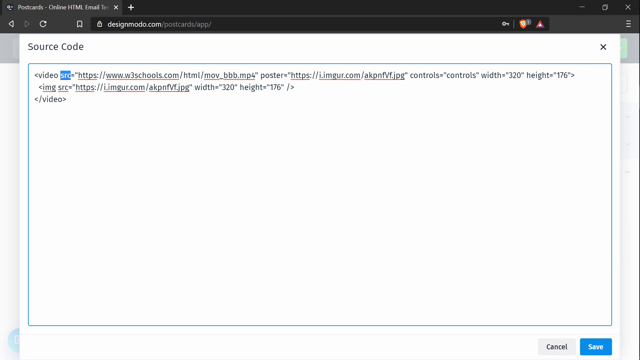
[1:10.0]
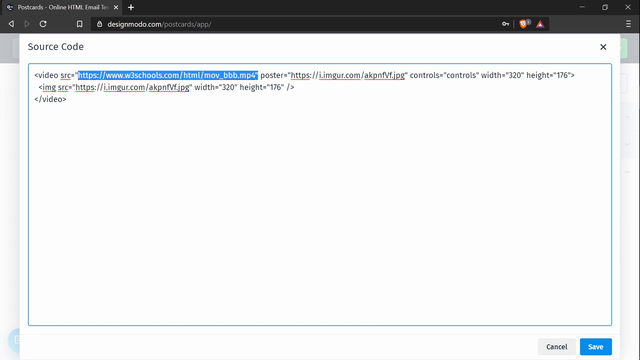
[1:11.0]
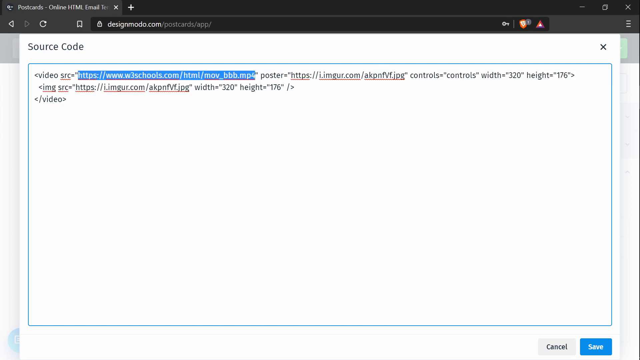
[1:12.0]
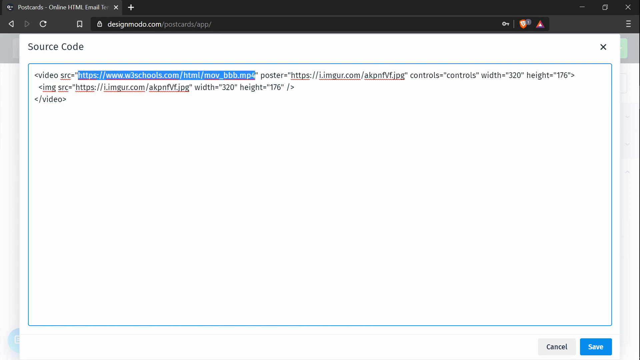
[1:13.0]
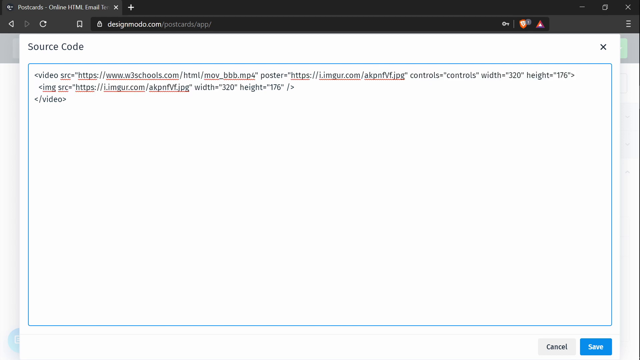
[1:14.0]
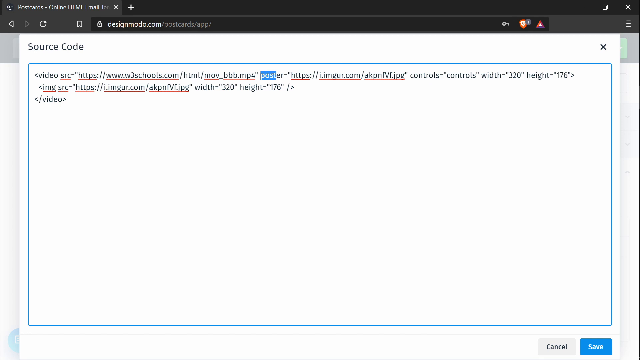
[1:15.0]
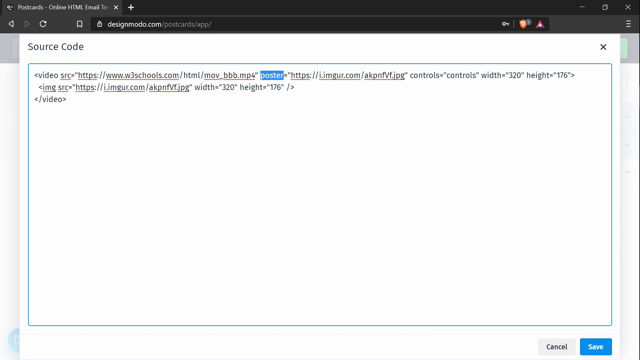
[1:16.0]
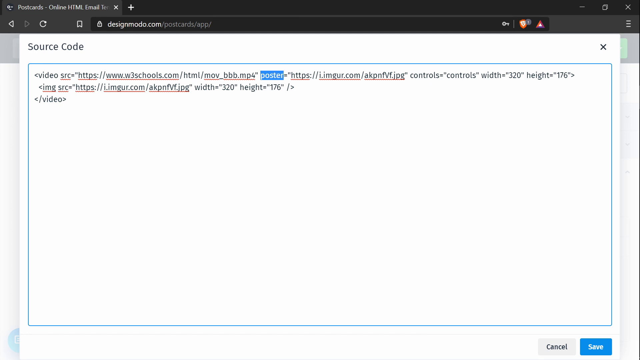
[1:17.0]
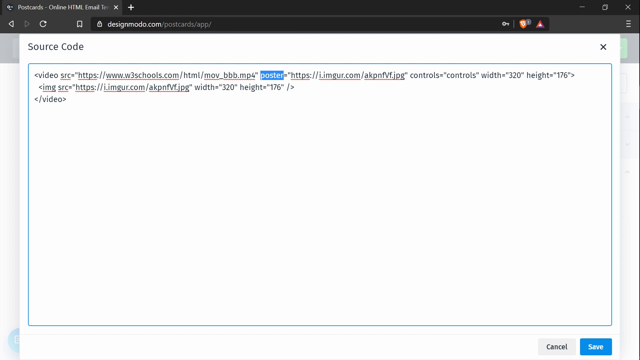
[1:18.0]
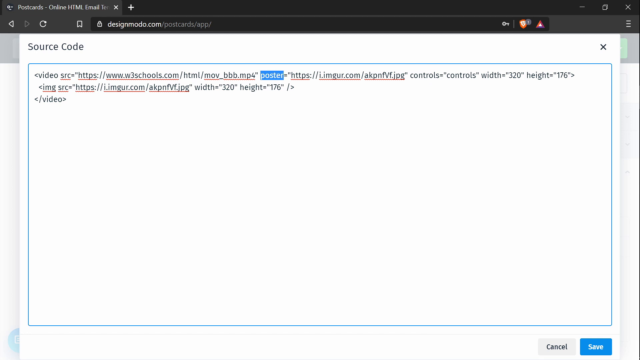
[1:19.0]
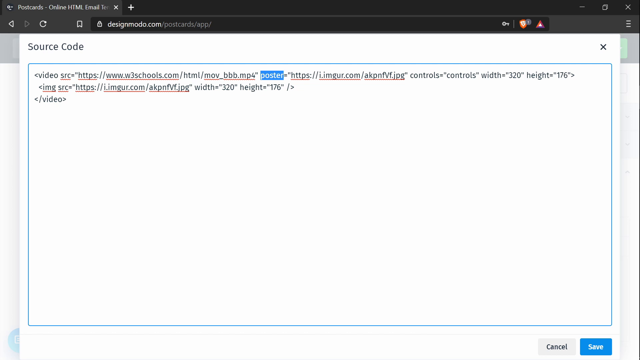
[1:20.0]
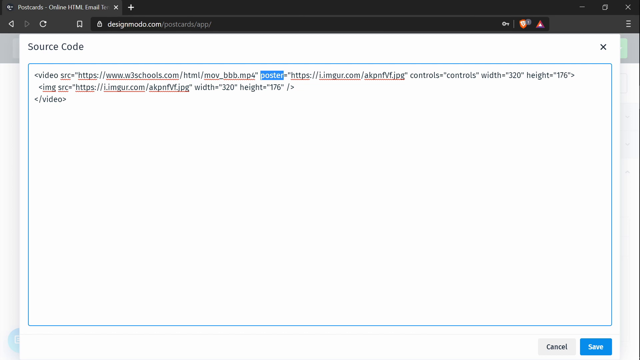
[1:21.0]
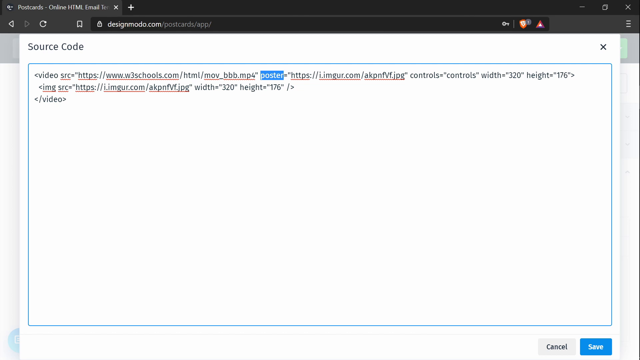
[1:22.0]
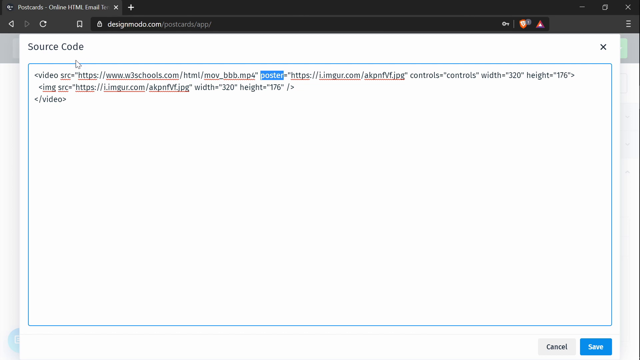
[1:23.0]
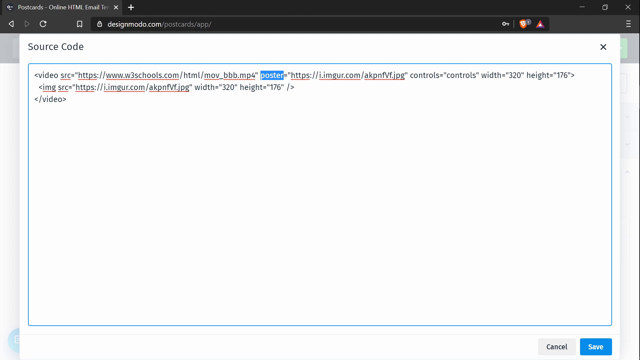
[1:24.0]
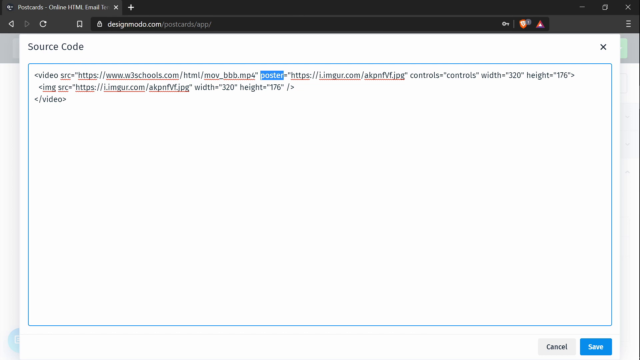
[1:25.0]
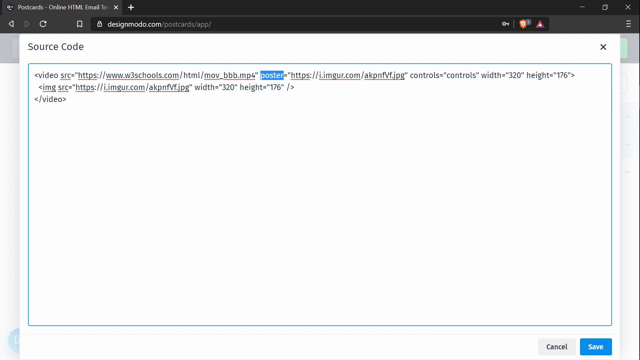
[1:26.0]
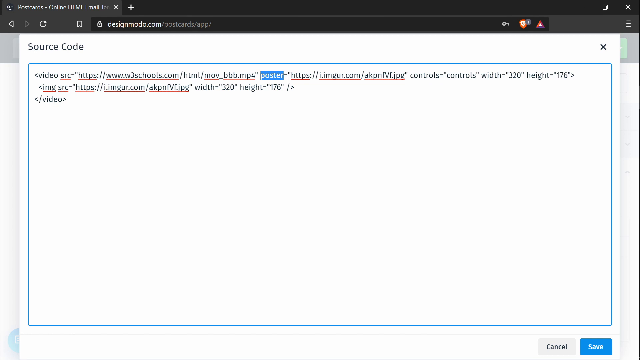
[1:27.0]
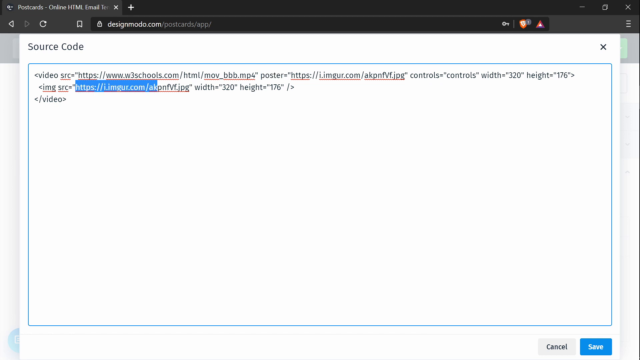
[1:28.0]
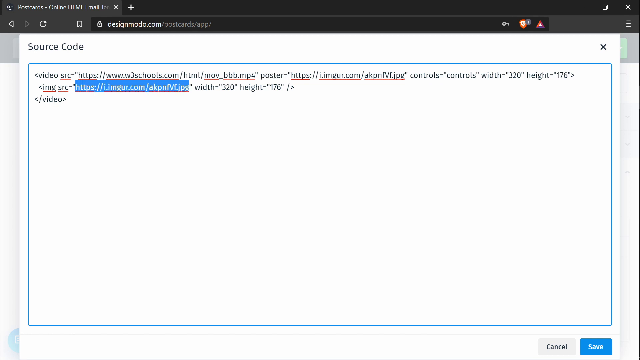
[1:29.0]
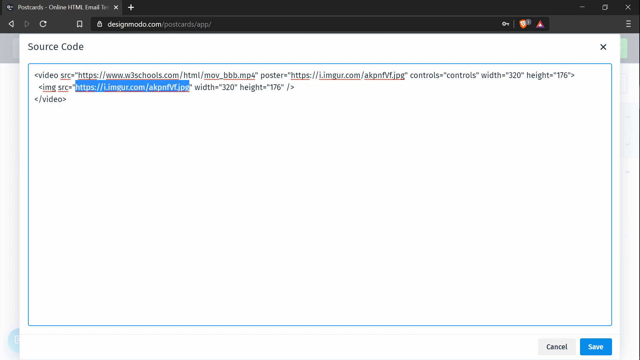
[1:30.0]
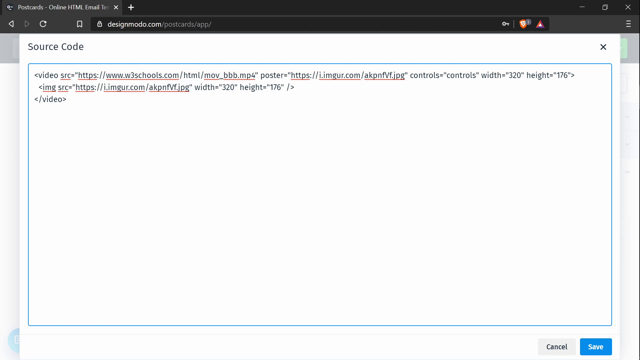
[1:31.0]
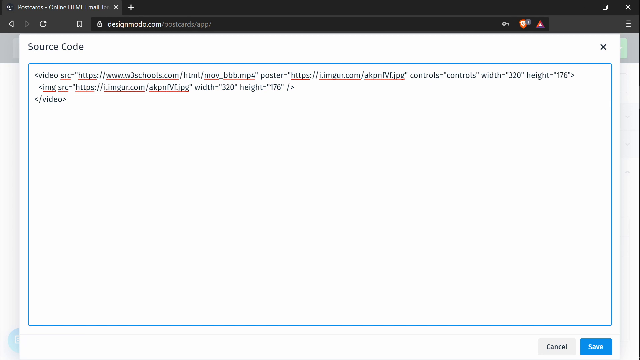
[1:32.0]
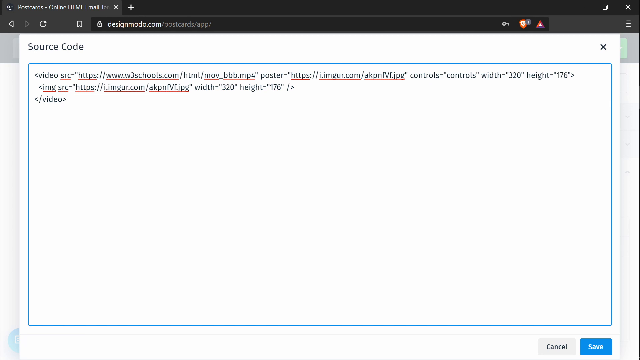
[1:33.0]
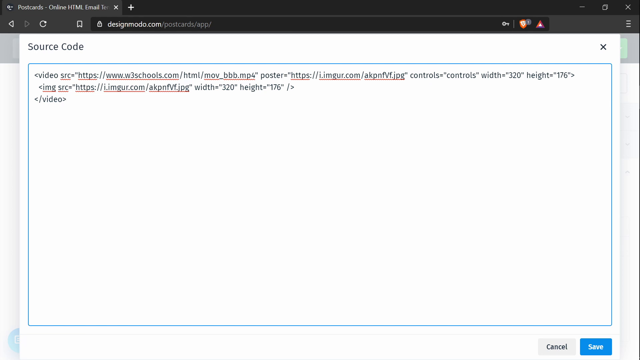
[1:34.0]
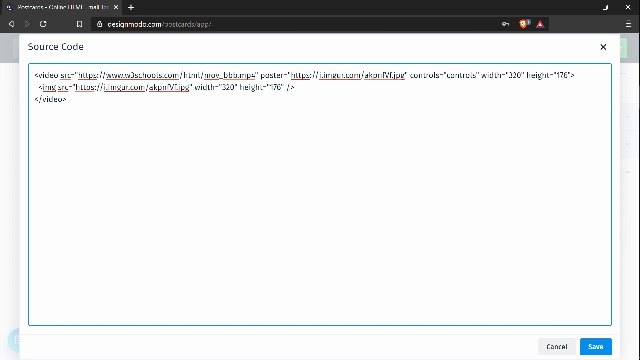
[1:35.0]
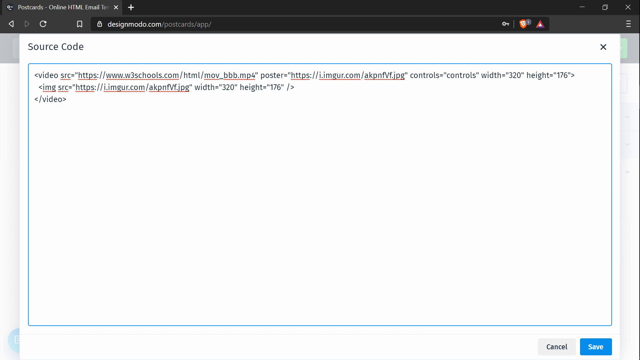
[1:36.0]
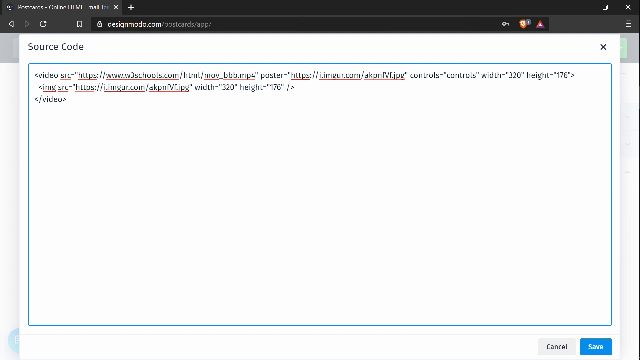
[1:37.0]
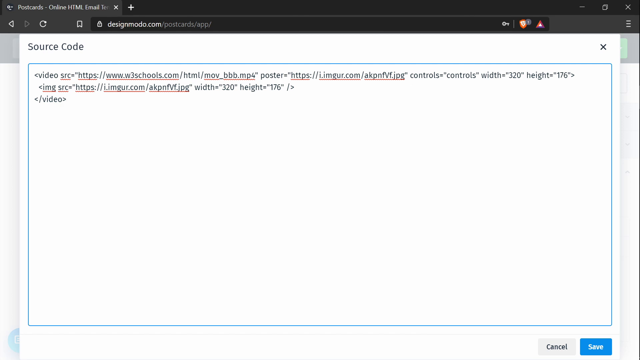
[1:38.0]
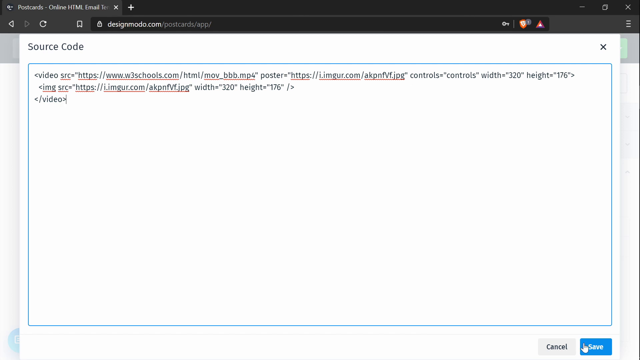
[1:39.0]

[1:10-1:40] The person highlights in blue the first website, w3schools.com, then highlights the next section of the code, "poster", before unhighlighting it and highlighting the next web link, to imgur.com. They leave the cursor at the end of the text. Altogether the code reads "video src", an equals sign and a speech mark, then the w3schools.com link with https and html parts and a movie mp4 link at the end. After this comes "poster" equals another website, imgur.com, then "controls equals controls width 320 height 176", then an image source with another link to the same imgur website copied previously, then "width 320 height 176", and underneath that "a video."